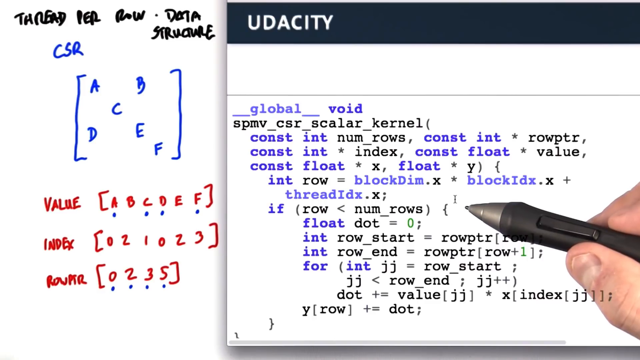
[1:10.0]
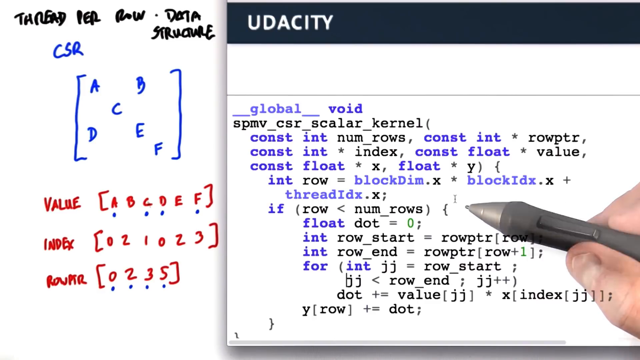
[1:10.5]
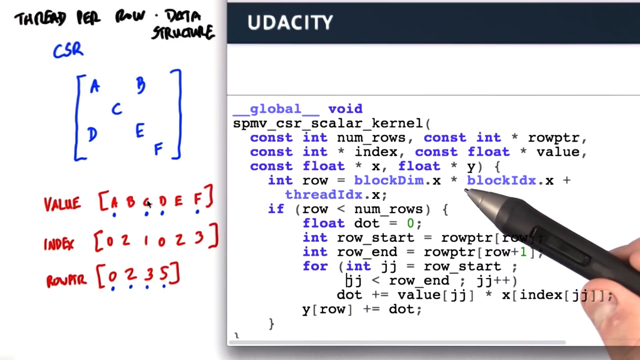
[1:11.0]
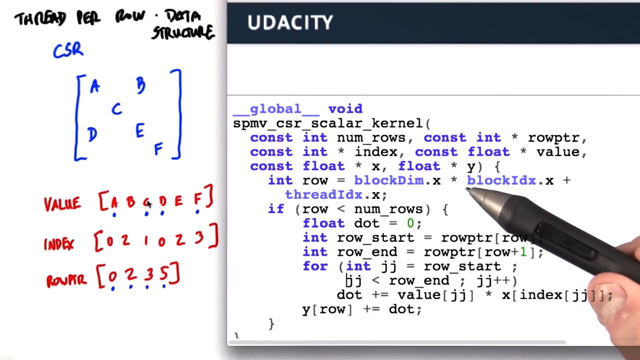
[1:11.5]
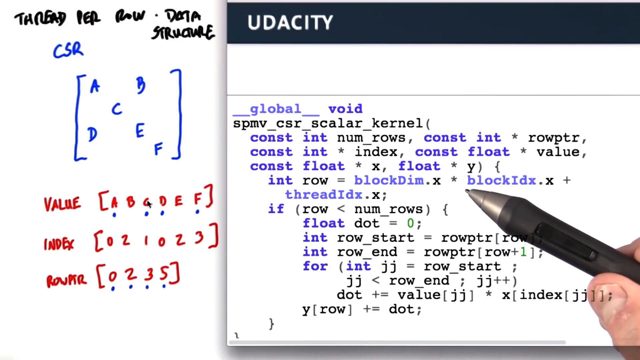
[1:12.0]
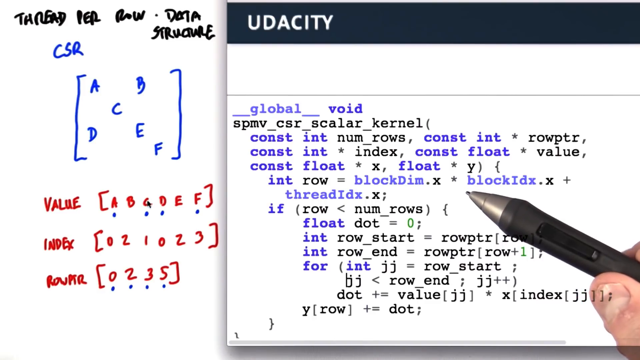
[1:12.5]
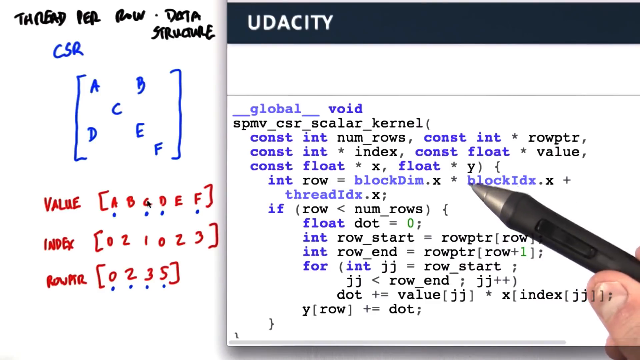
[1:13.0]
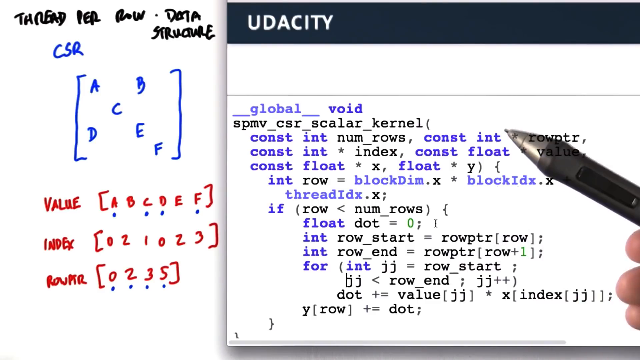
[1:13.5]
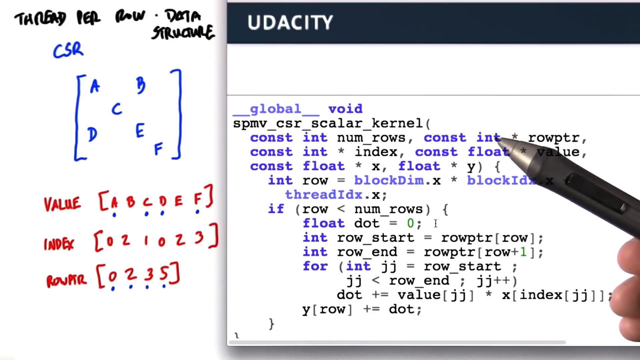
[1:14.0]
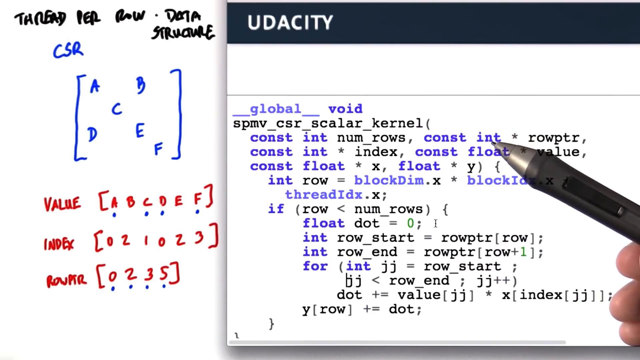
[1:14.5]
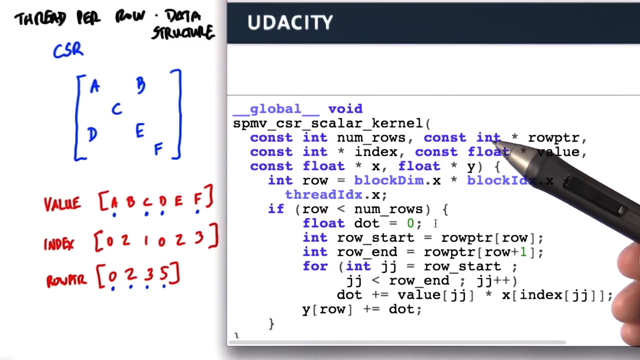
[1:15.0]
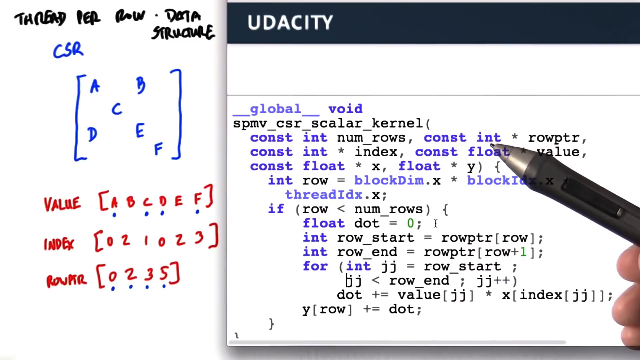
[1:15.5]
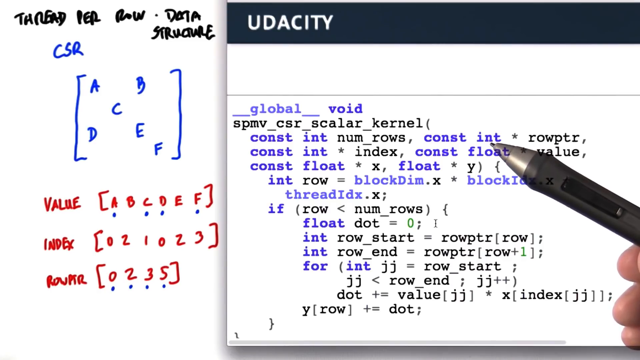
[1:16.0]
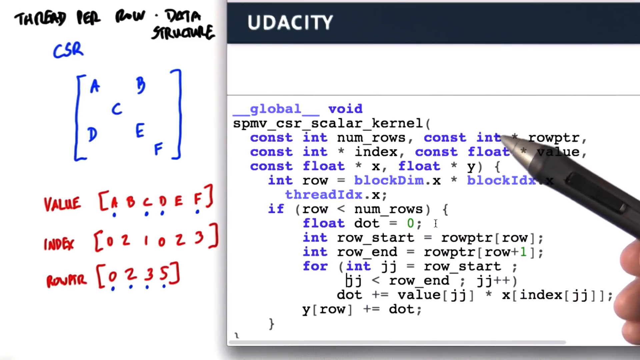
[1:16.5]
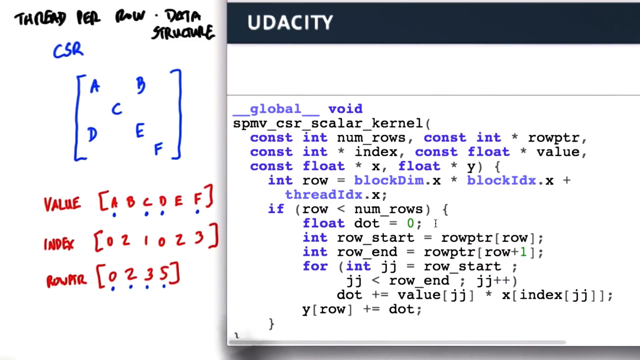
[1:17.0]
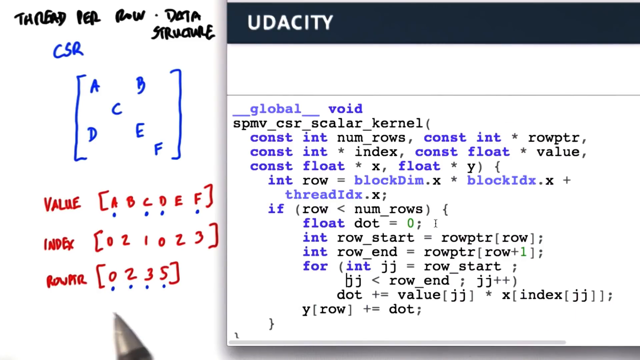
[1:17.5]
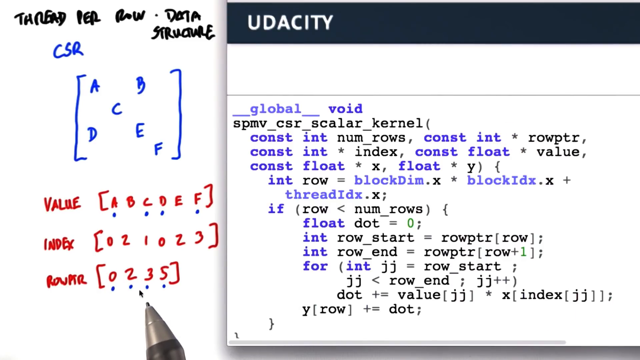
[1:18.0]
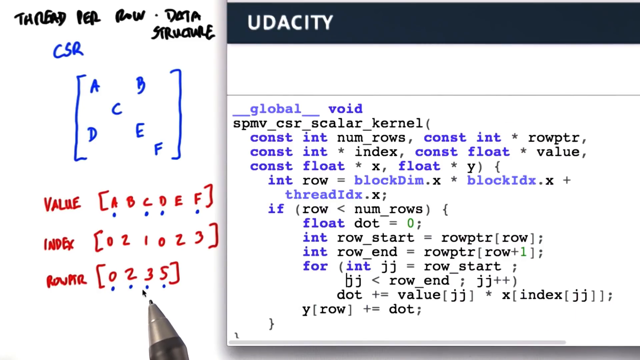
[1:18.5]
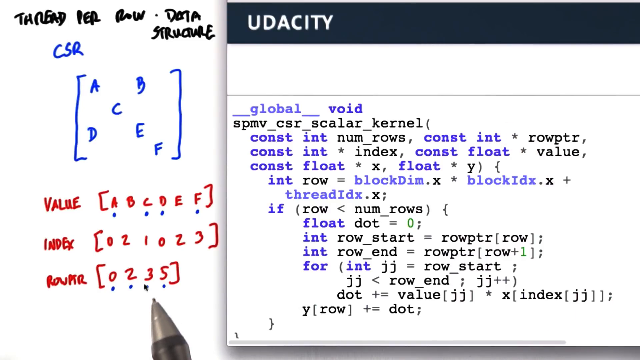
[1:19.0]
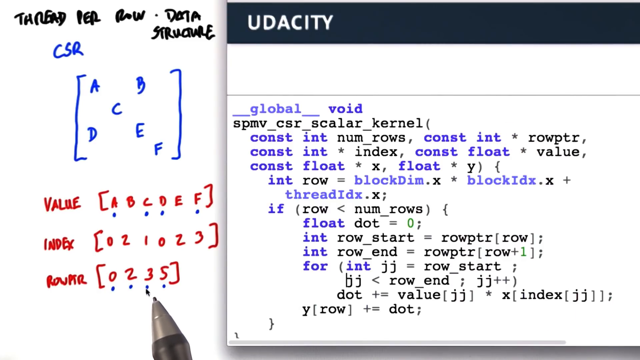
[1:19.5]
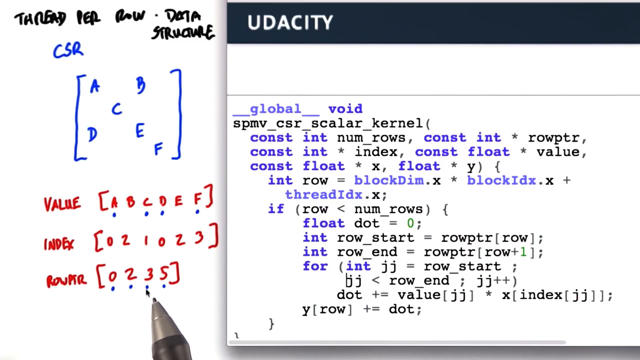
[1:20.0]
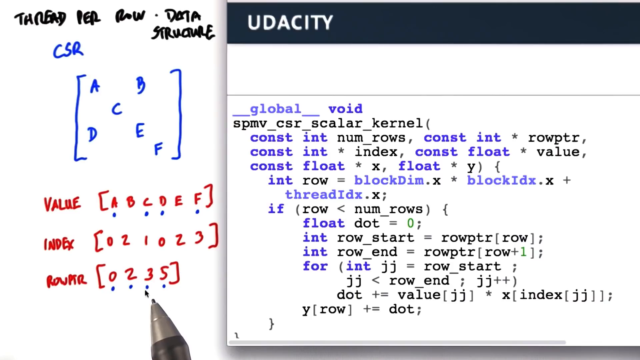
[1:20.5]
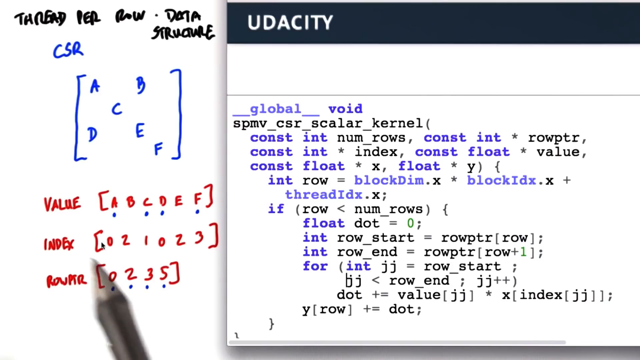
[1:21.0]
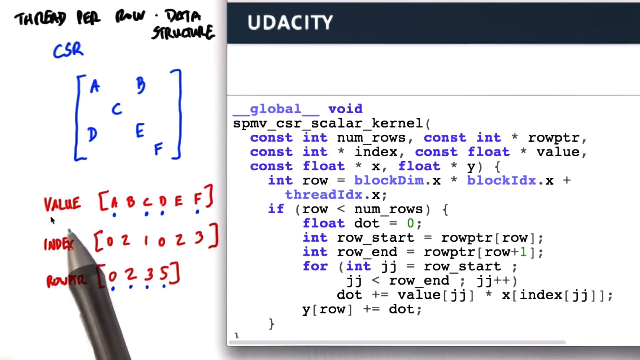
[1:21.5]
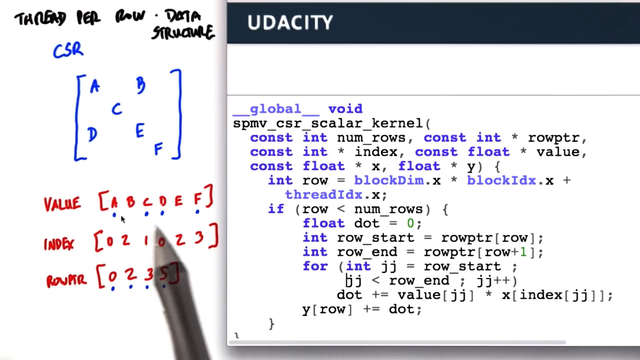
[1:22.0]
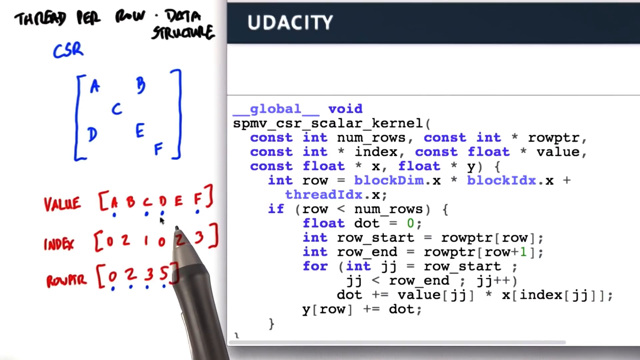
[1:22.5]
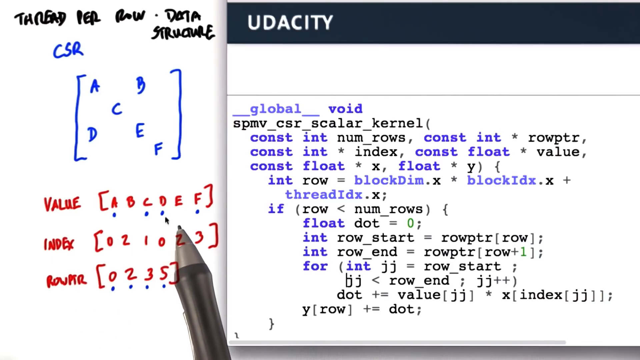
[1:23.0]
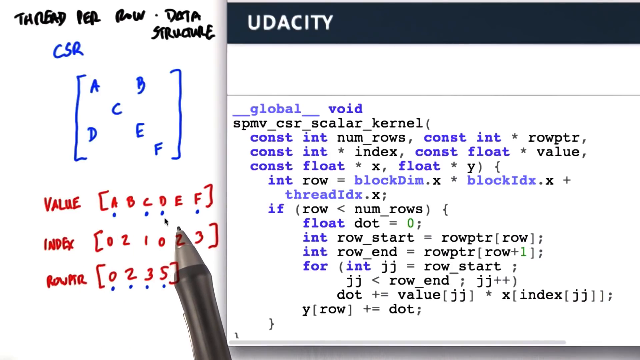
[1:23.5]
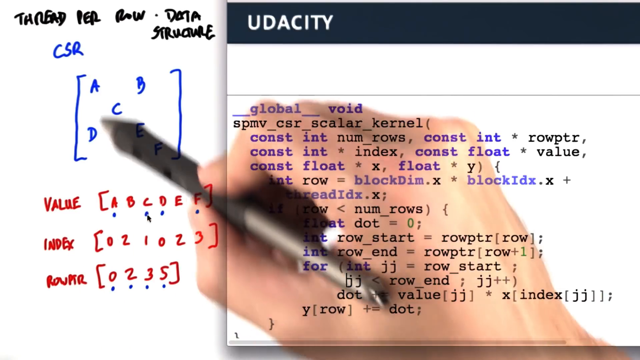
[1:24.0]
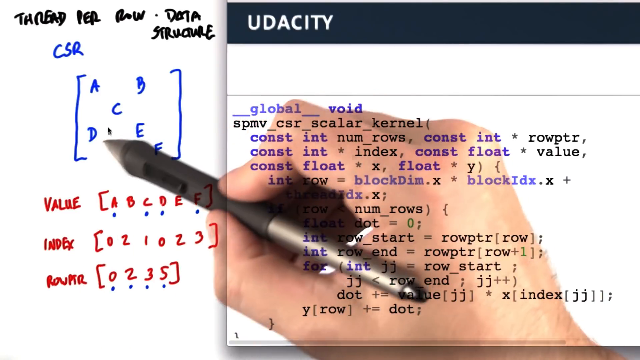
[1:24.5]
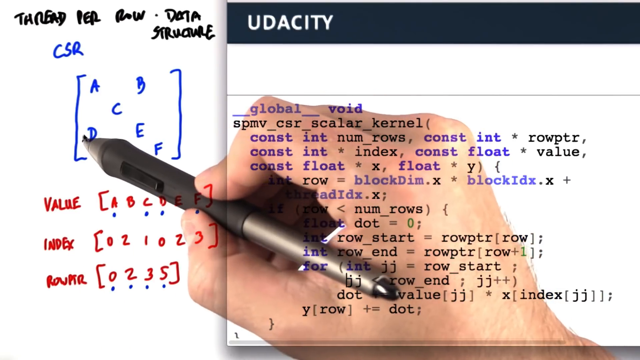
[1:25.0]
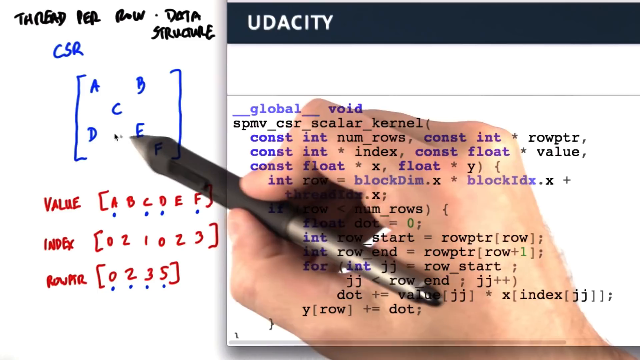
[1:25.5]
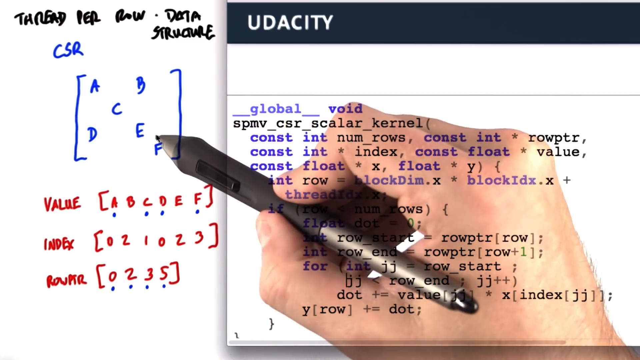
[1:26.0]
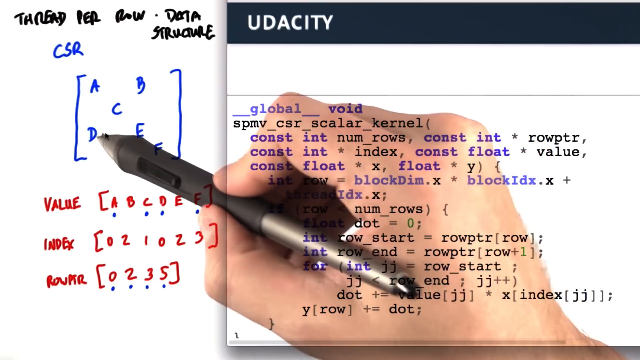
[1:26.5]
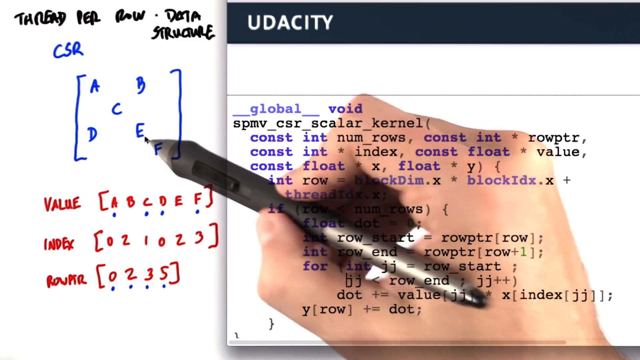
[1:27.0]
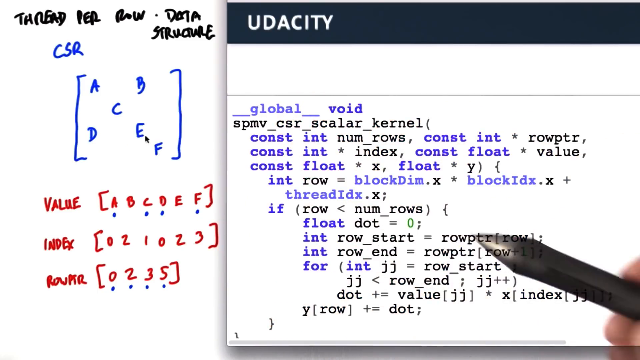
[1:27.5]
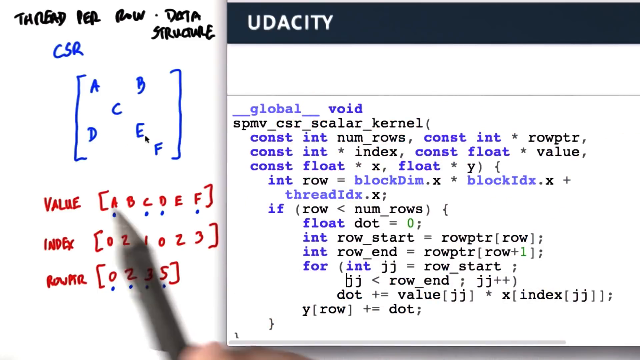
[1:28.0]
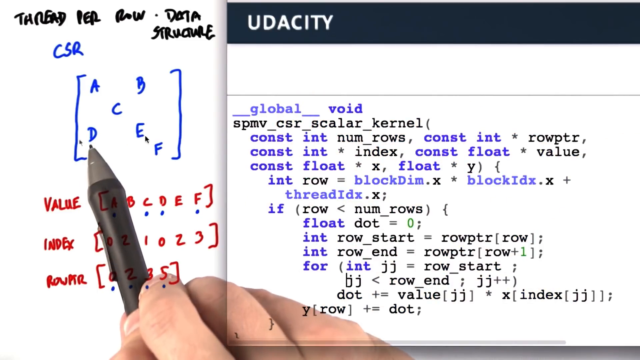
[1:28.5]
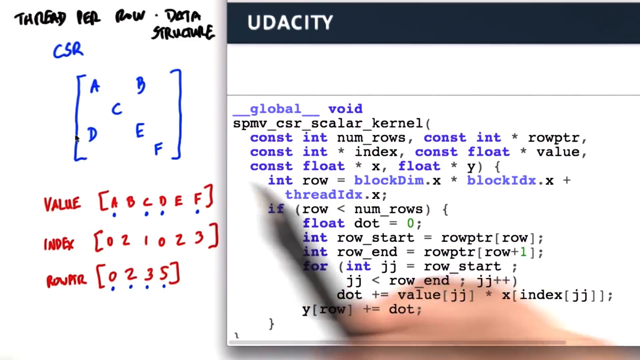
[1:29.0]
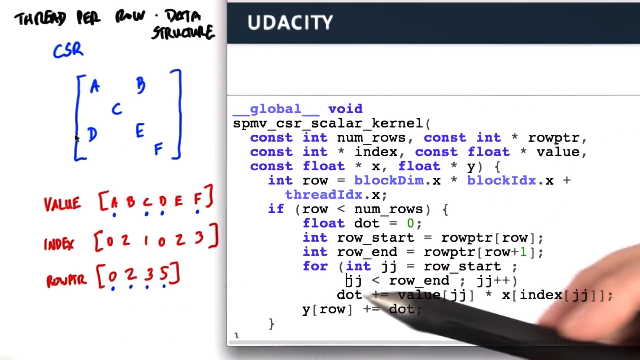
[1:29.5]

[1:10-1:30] The screen is the same as before, with the thread per row data structure on the left and about the other two-thirds covered by the Udacity code overlay. The pen moves slightly as the instructor is apparently explaining lines of code, going back and forth over the words "block ID", up to "int", down to "start", and back to "int". Multiple lines of code take up the screen, in black and blue, with the code itself in blue. The pen then moves over to the other side, pointing at the thread per row data structure: at the number 3, then up to value, sliding along that row with the pen tip, then to the D and E from the CSR, and the D again.